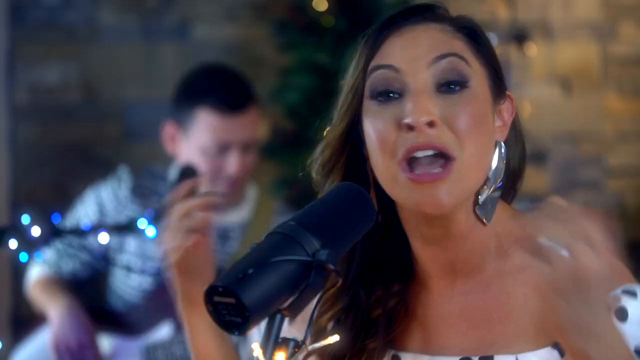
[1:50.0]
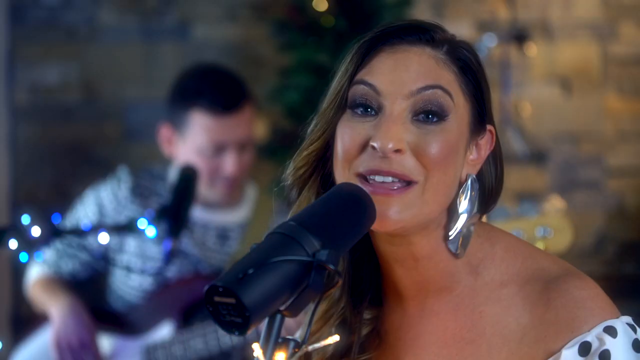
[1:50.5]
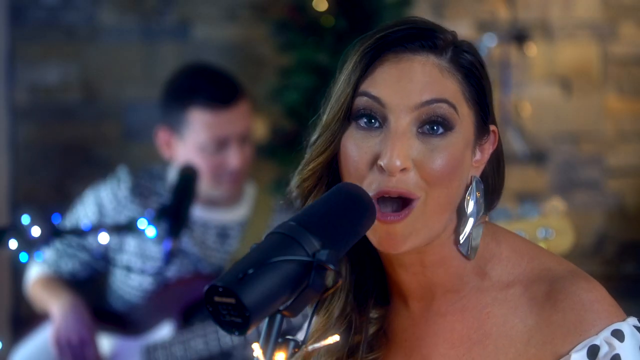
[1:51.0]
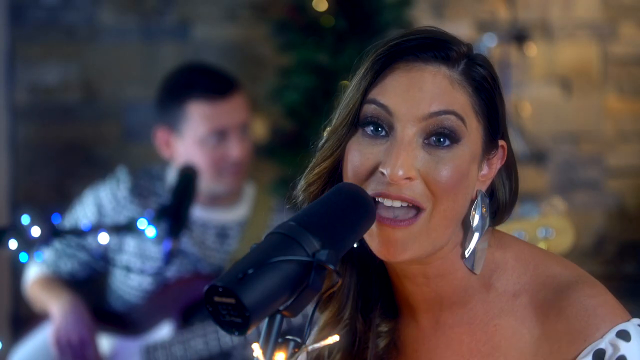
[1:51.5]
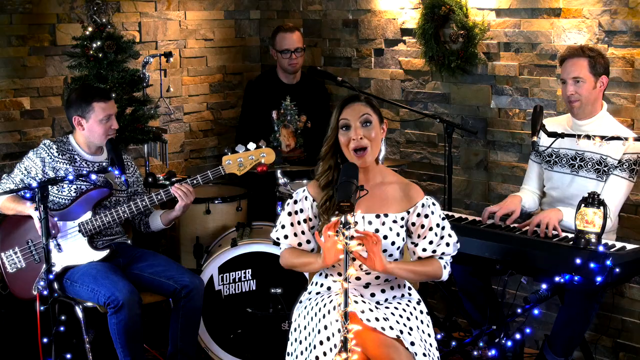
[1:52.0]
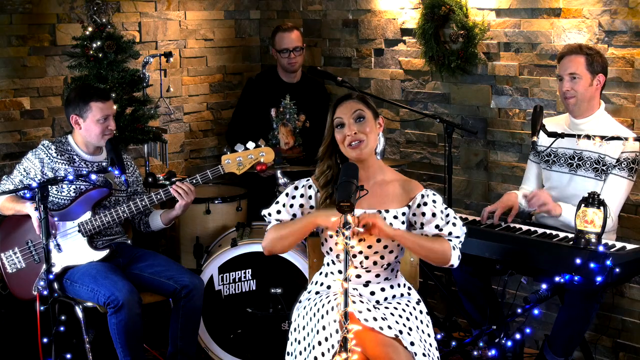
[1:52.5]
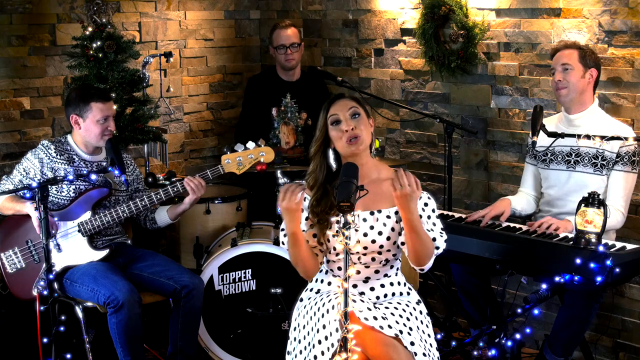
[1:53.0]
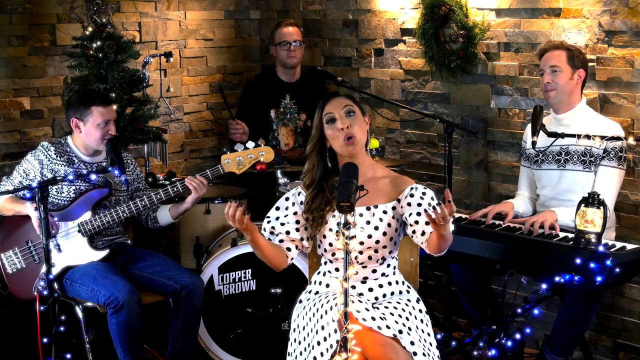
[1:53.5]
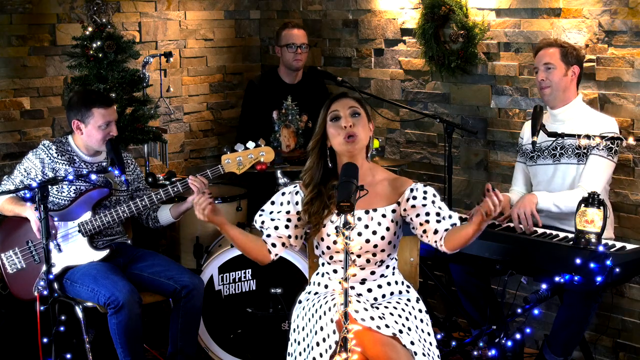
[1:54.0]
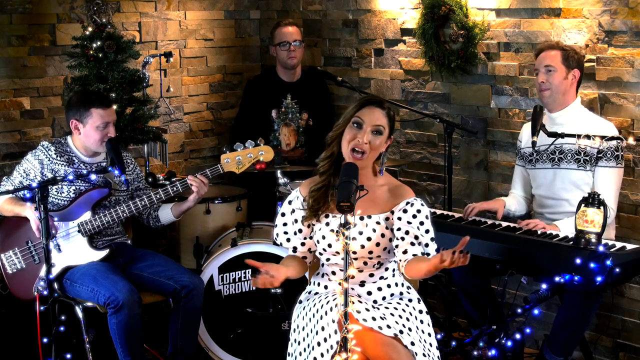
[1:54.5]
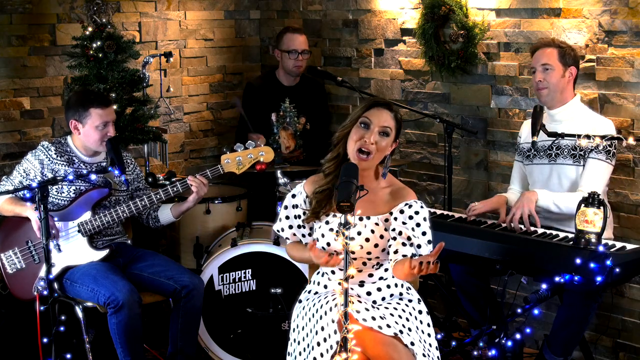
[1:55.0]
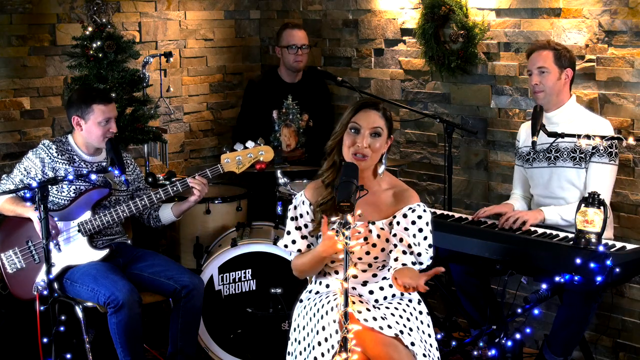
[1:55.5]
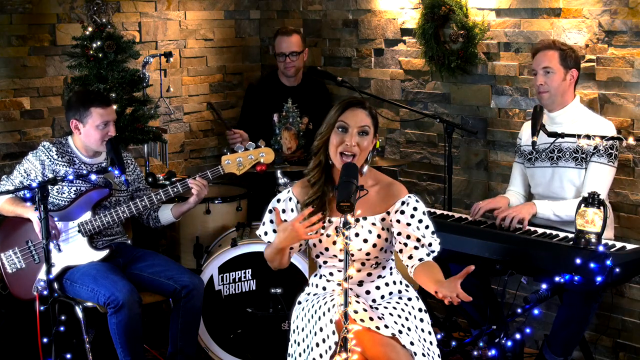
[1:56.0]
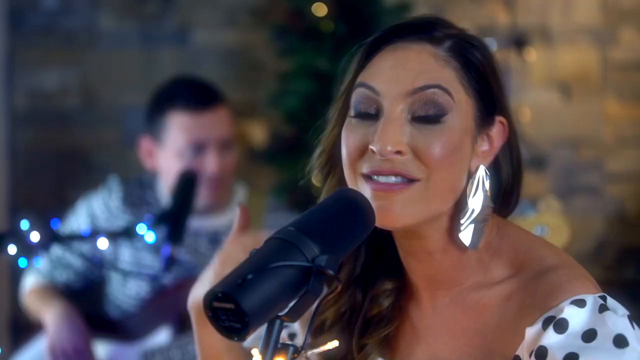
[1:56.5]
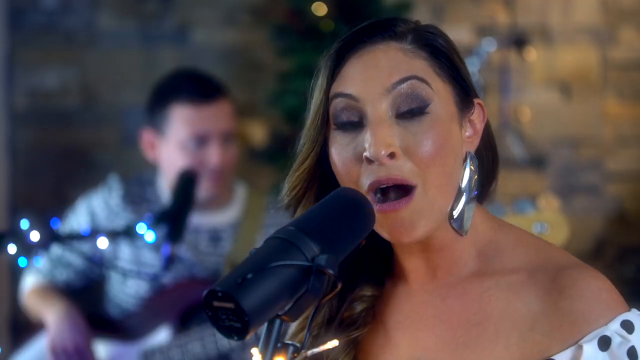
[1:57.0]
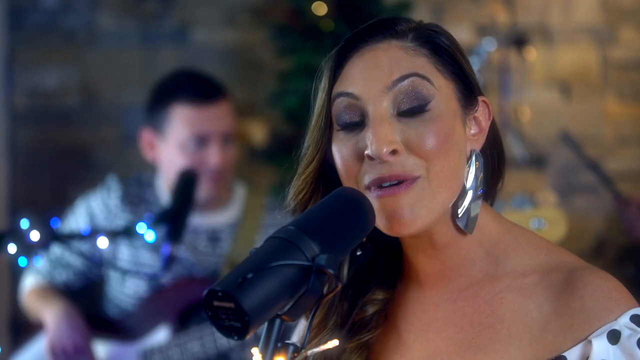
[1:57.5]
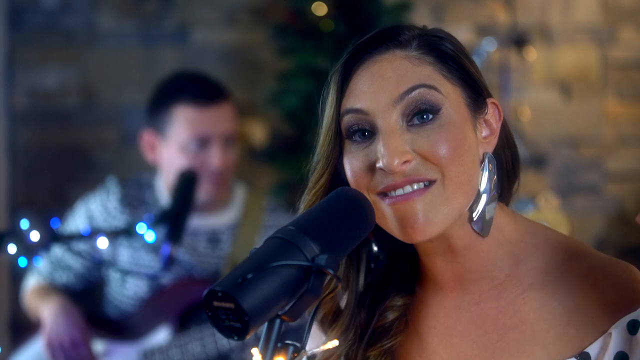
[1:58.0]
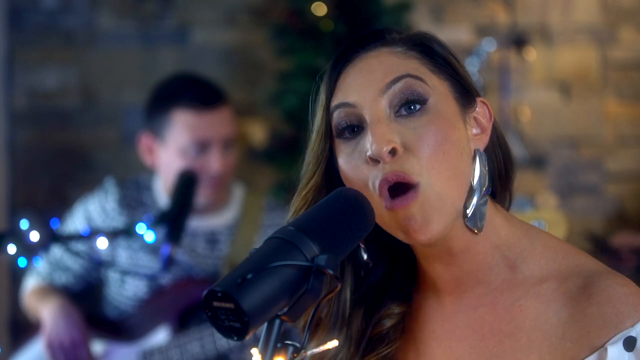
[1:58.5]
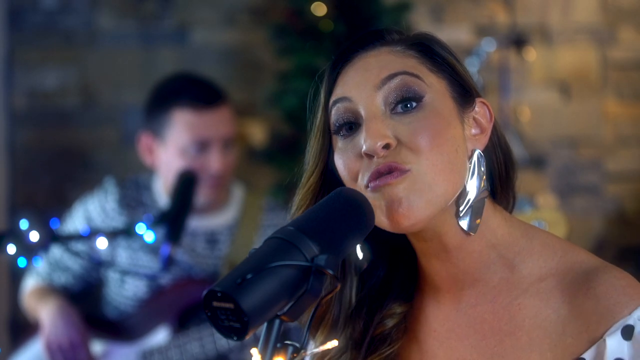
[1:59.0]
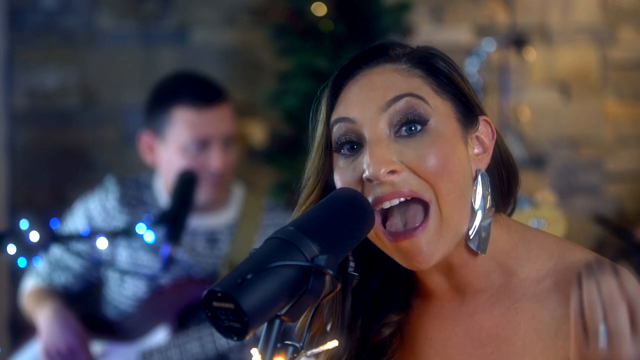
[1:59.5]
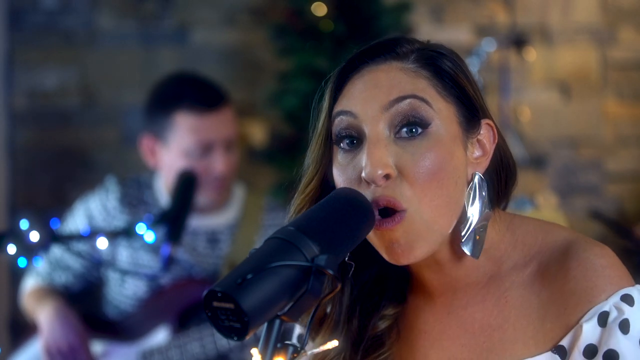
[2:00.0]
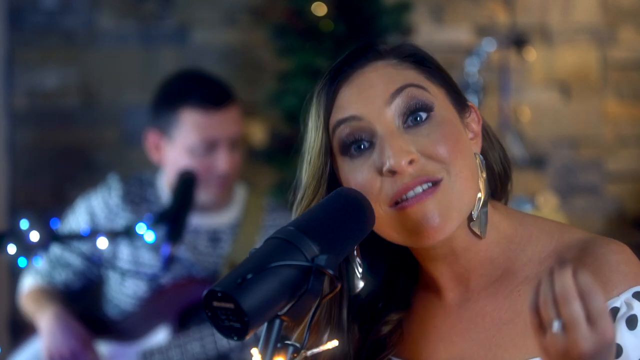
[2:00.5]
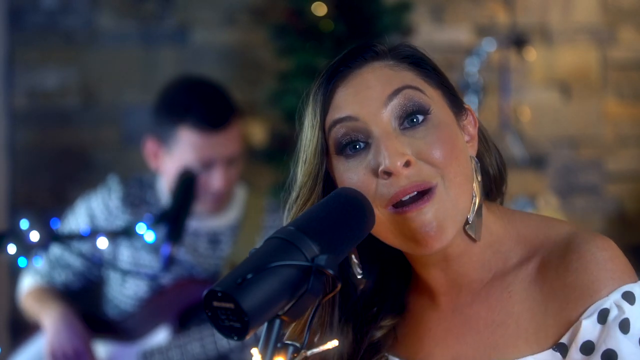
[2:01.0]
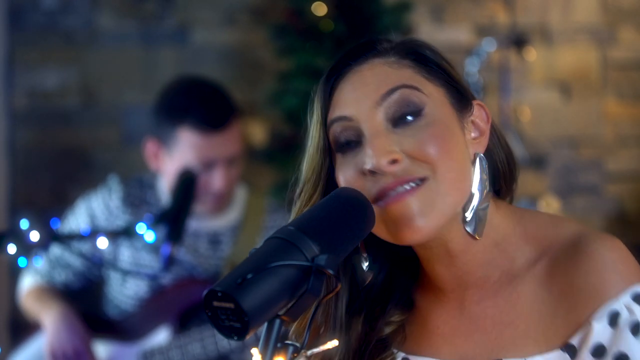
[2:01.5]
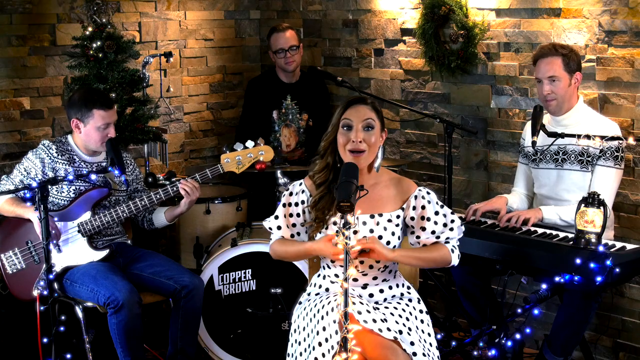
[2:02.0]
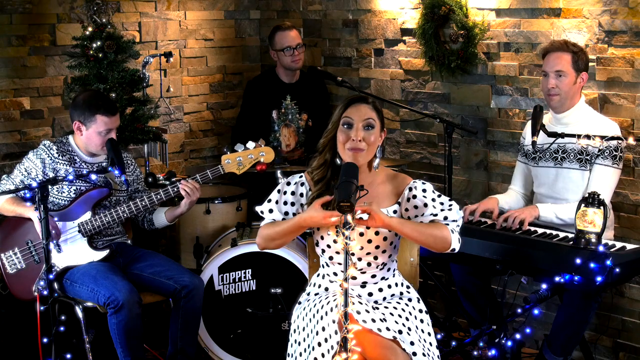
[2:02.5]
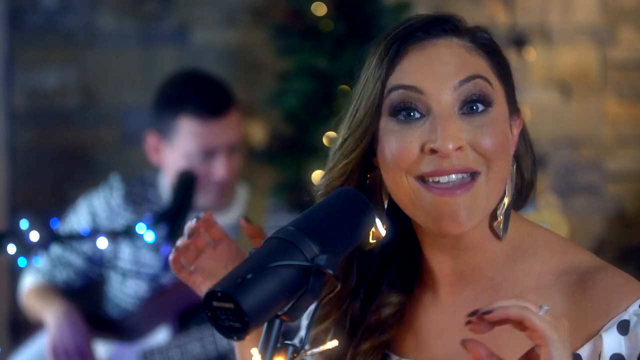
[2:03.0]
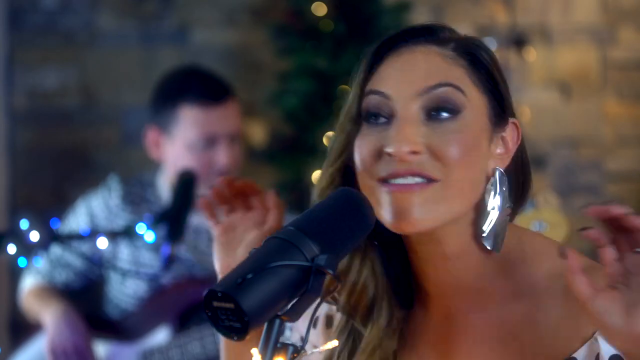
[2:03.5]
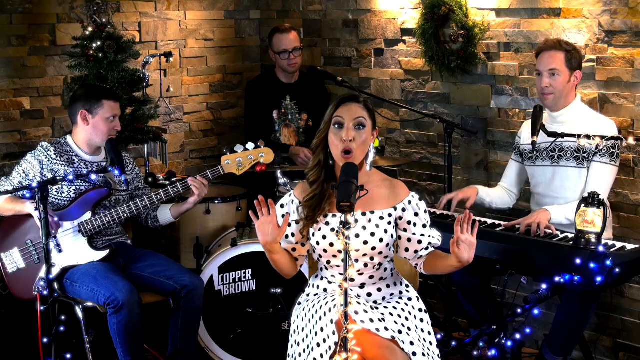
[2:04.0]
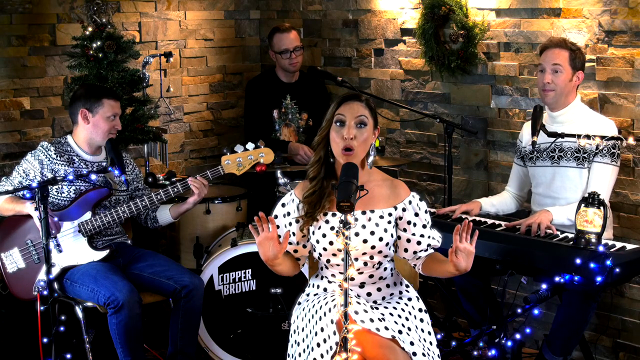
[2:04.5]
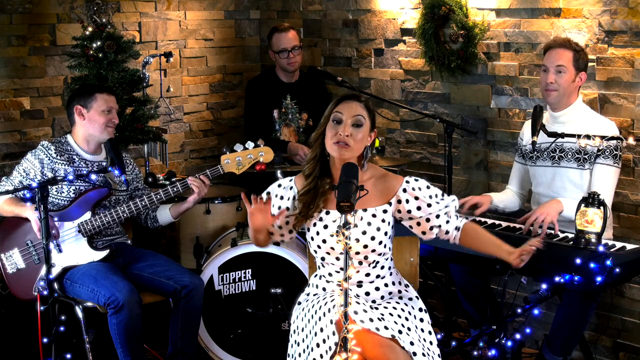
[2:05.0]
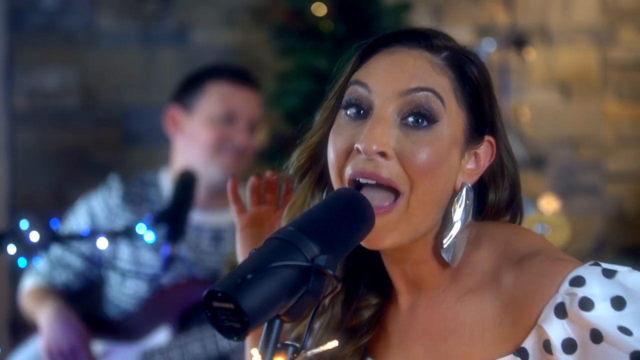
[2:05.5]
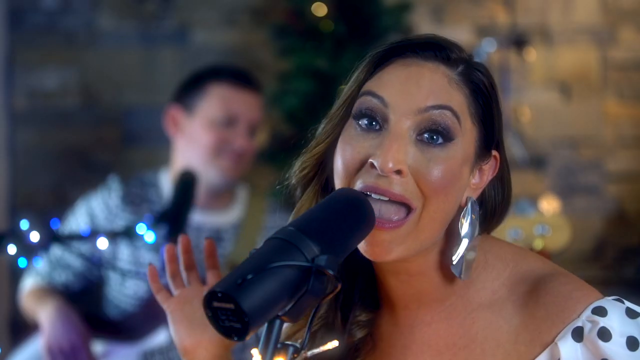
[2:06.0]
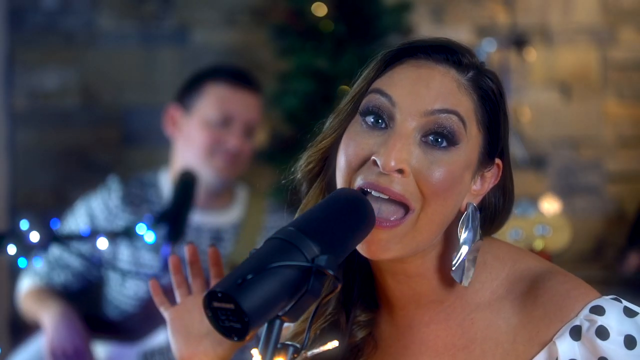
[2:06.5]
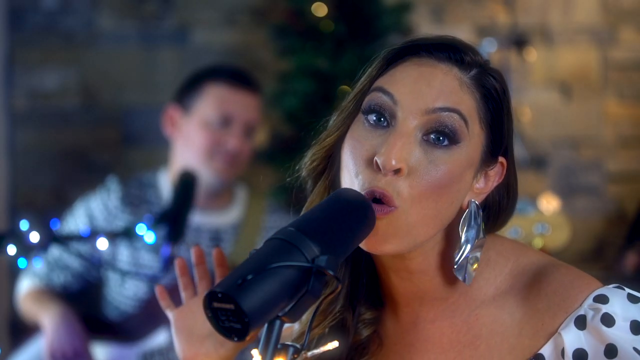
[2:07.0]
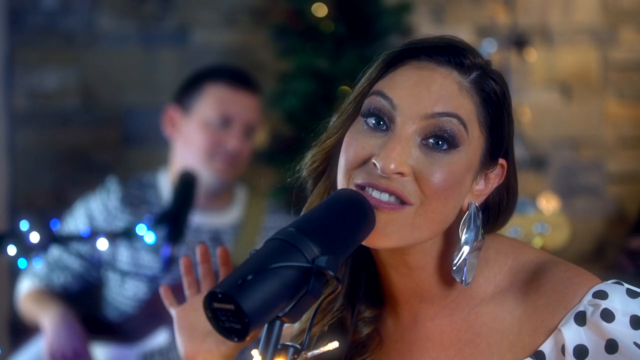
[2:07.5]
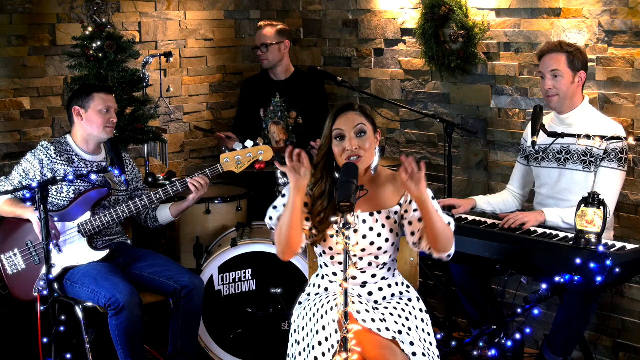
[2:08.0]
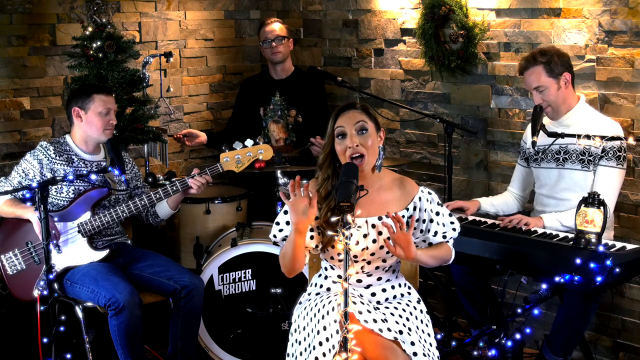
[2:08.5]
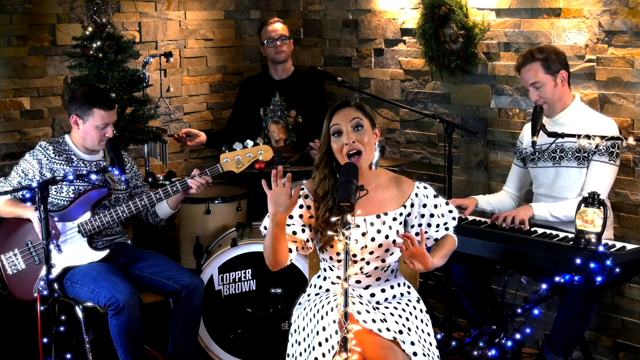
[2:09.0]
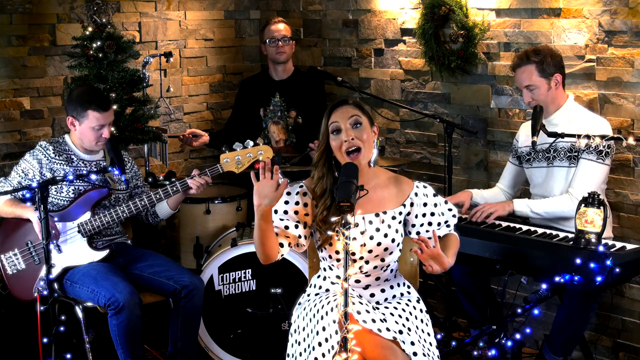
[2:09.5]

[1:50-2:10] A woman sings into a microphone, shown from a camera angle where she is kind of singing off to her side rather than straight into the mic; the microphone is on the right of her face. Her long, dangly silver earrings catch the light as they move while she sings. Her face turns back to the center, and the video cuts to a different camera angle showing the whole band: a guitar player, a drummer and a keyboardist, all men, all playing their instruments while she sings. She uses her hands a lot, theatrically bringing them in and pulling them out as she sings her high notes, constantly moving them in and out and up and down. She opens her mouth a lot while singing and is very expressive. The band looks pretty happy and cheery as they play.